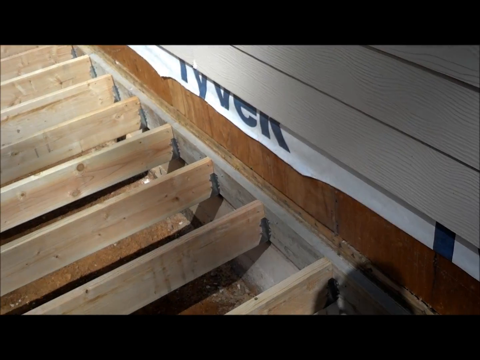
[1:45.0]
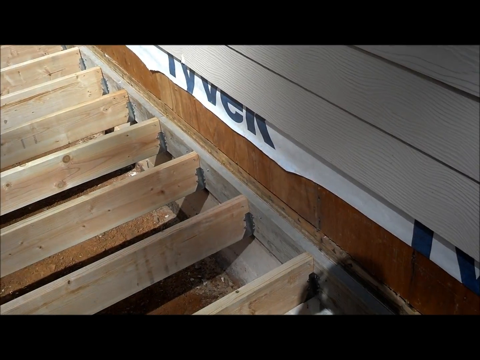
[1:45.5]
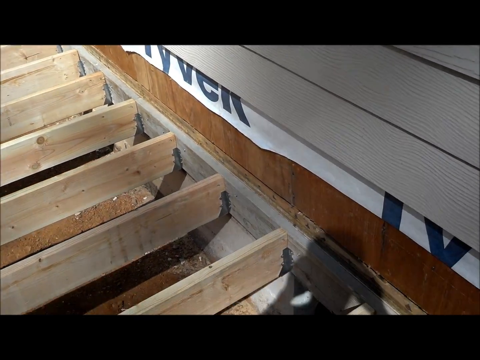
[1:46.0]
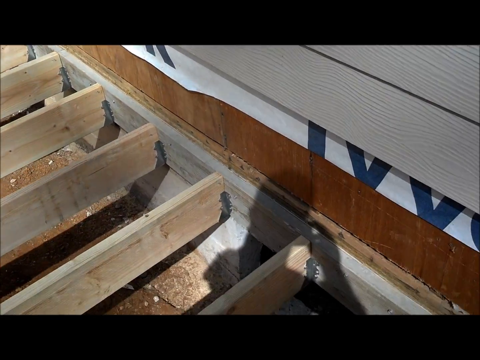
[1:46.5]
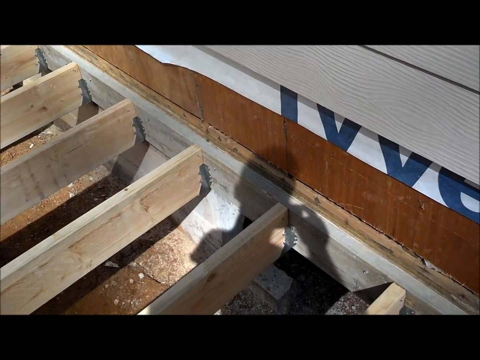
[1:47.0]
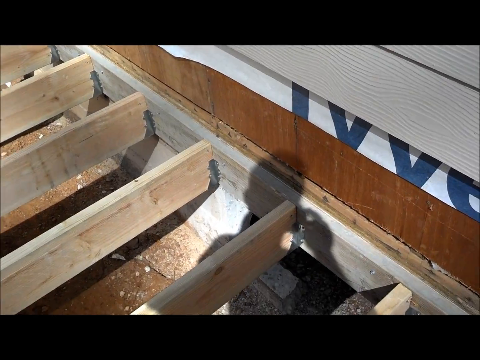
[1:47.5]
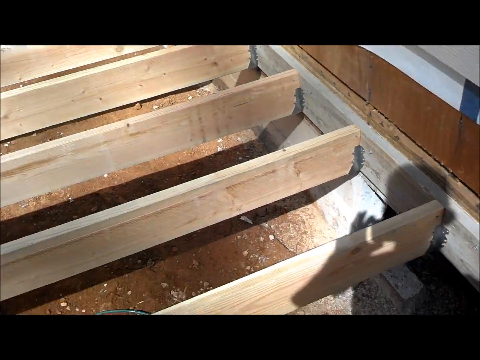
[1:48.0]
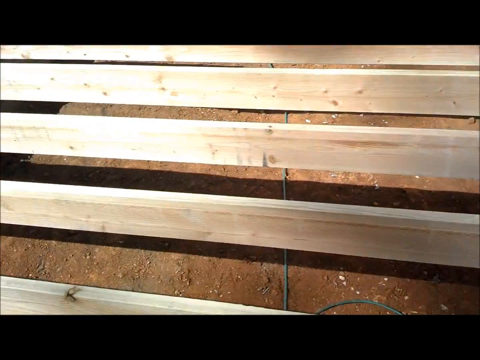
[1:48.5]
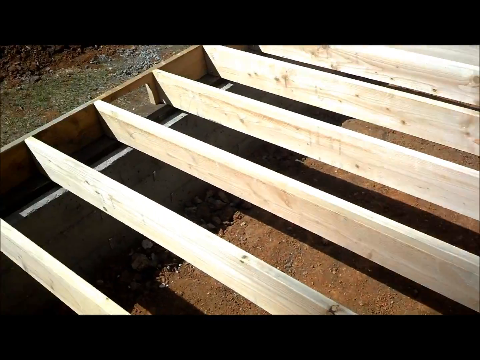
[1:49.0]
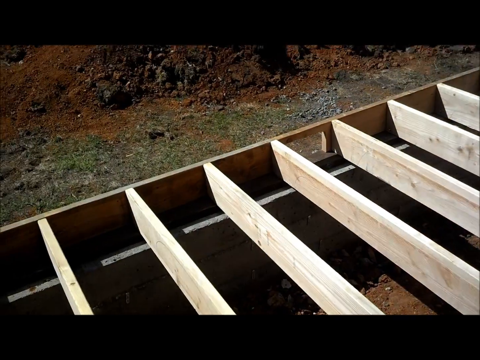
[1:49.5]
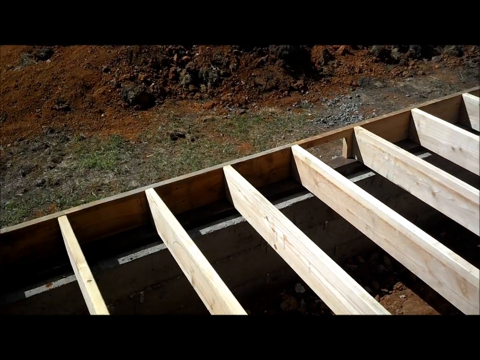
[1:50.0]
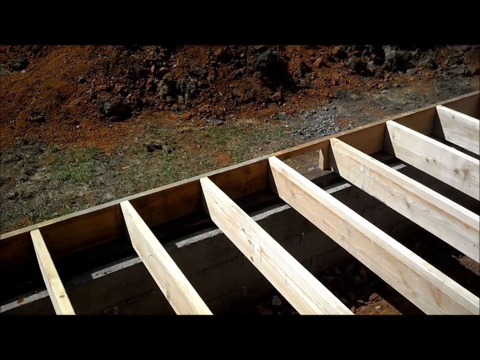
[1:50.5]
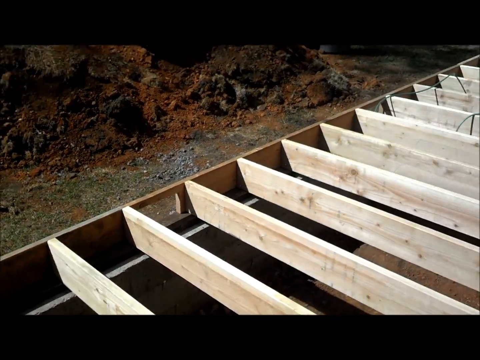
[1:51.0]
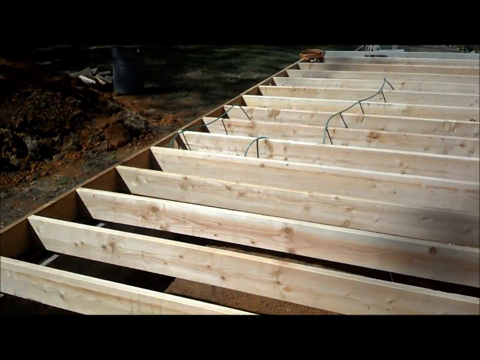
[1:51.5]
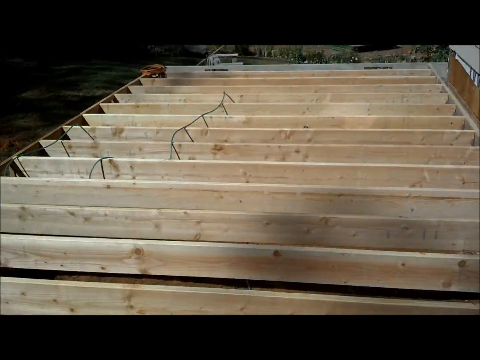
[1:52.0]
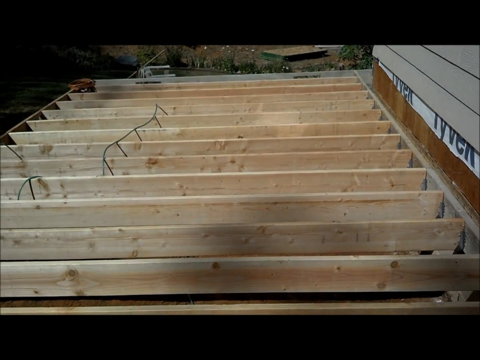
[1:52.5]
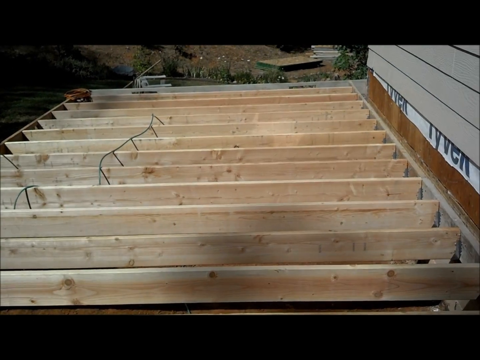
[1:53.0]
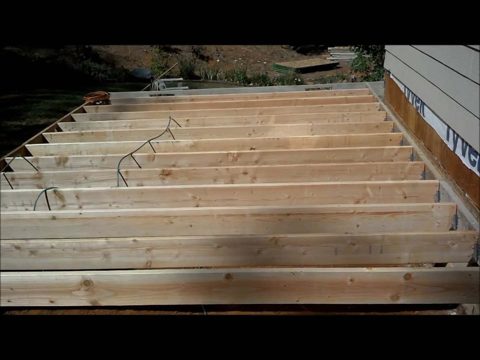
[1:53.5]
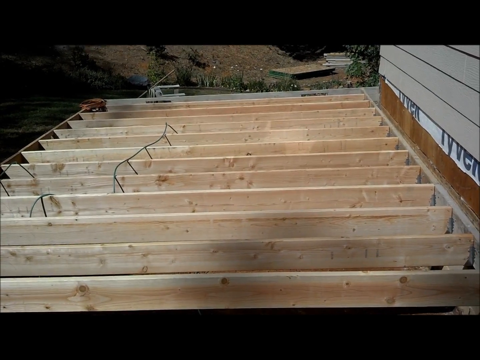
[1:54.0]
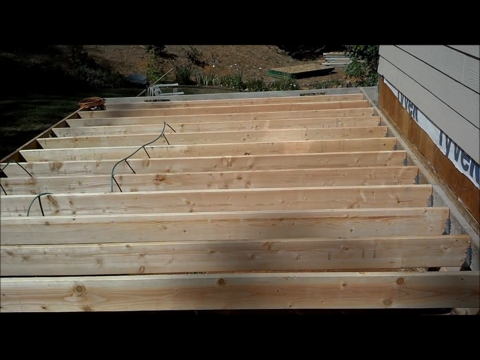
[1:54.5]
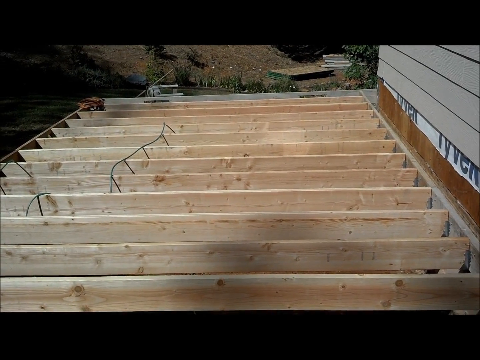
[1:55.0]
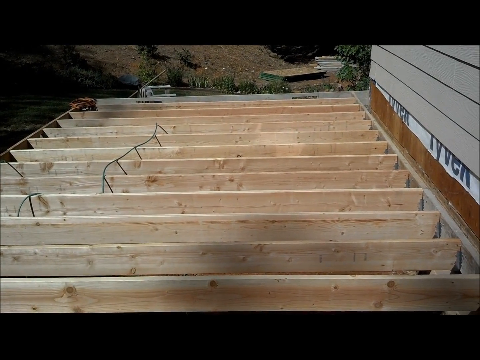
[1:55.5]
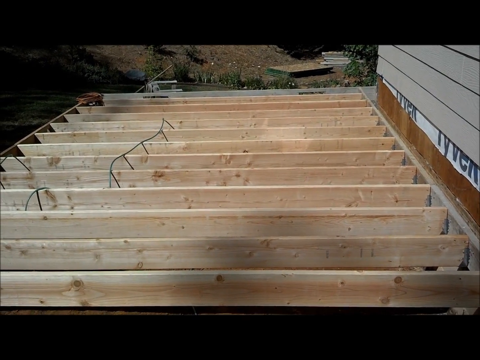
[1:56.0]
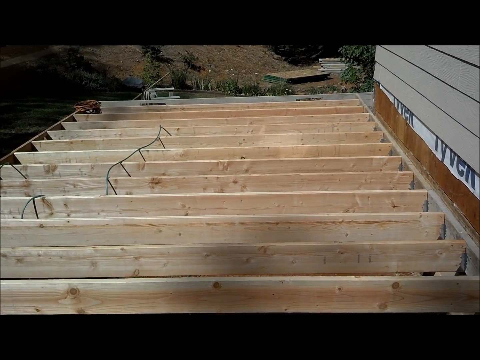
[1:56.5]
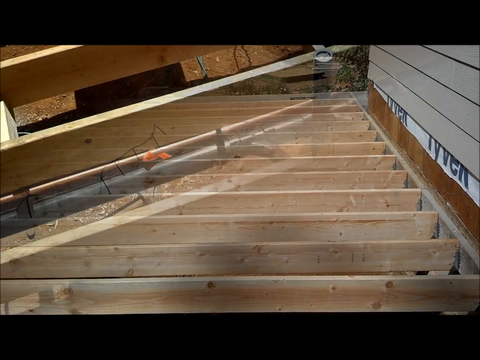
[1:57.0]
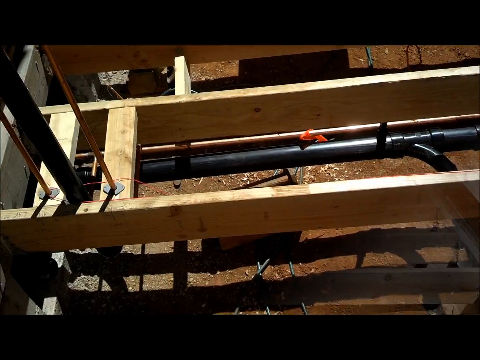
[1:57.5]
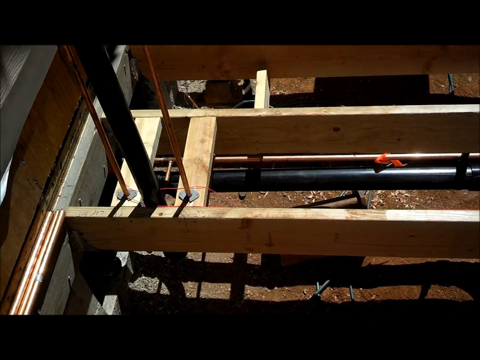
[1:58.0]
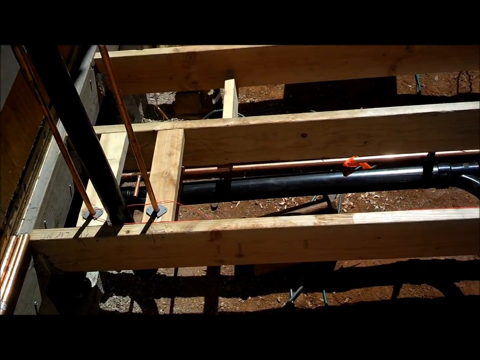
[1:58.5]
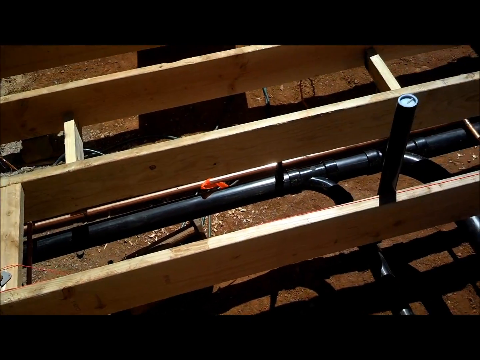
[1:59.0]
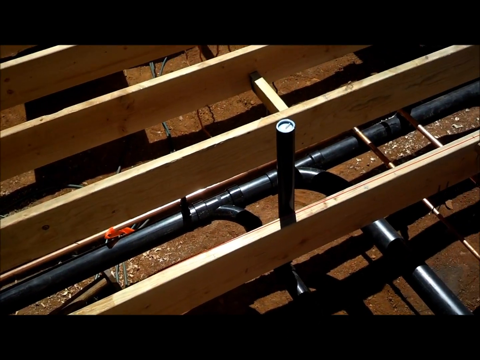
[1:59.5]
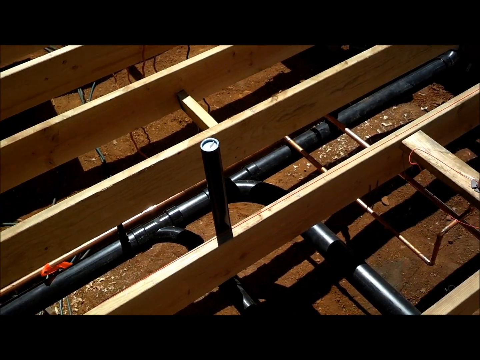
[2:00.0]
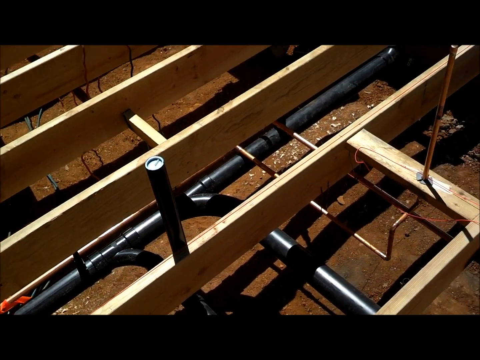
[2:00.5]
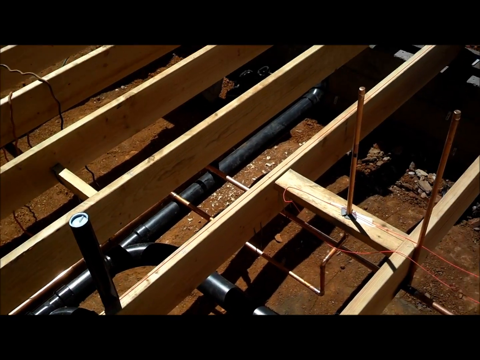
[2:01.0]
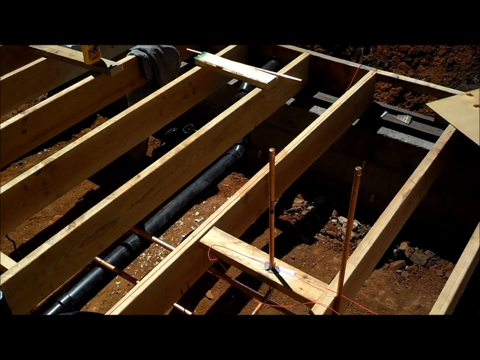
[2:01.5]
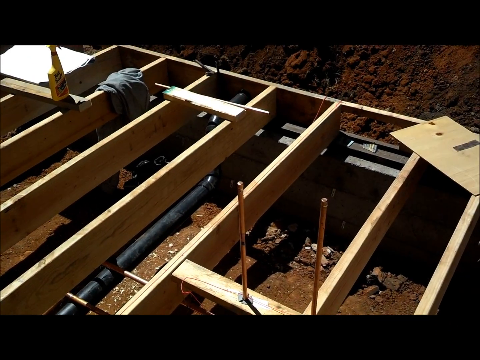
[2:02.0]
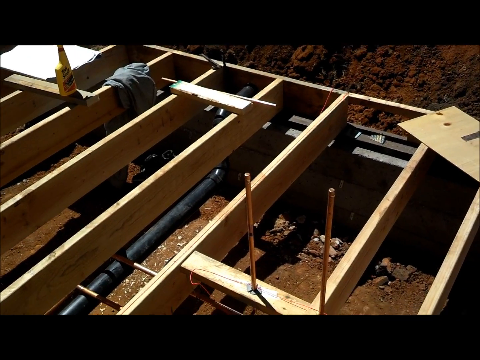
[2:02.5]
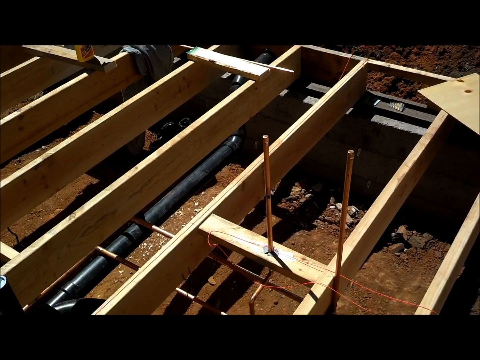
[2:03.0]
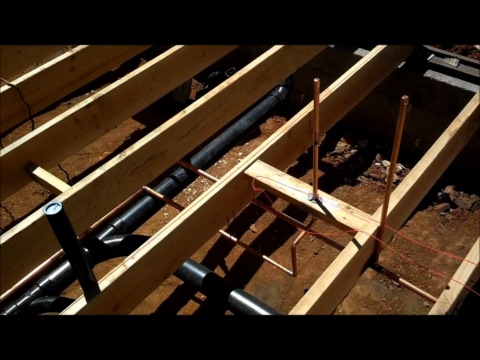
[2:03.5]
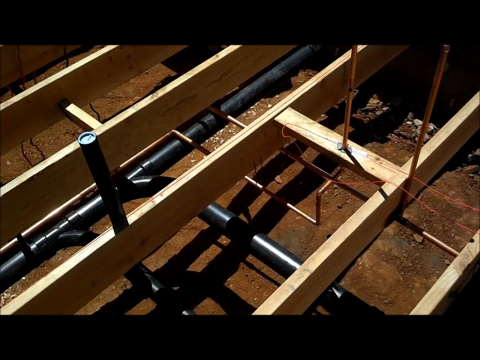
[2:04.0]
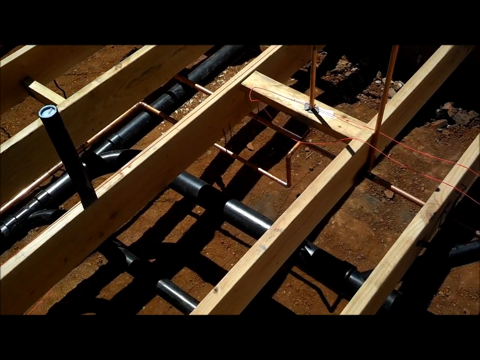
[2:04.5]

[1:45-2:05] A caption in white letters appears in the top left corner. Continuing from the laid wood, plumbing is shown underneath the floor along with wires that look like copper wires, apparently for electricity. The work looks even and neatly spaced across what is a very large area. The man doing the work does not show his face.